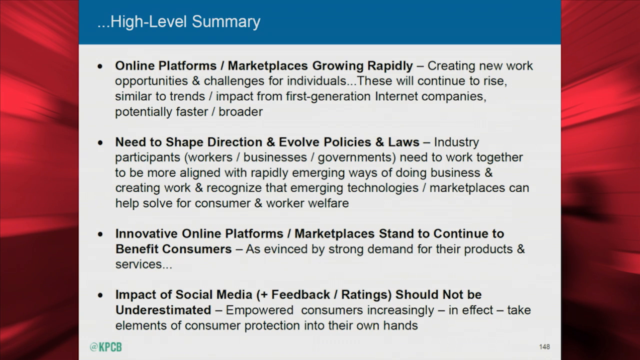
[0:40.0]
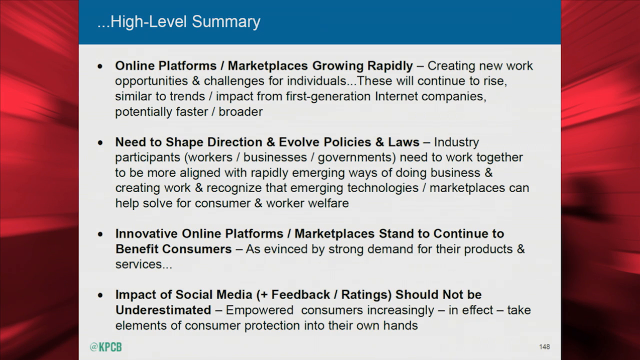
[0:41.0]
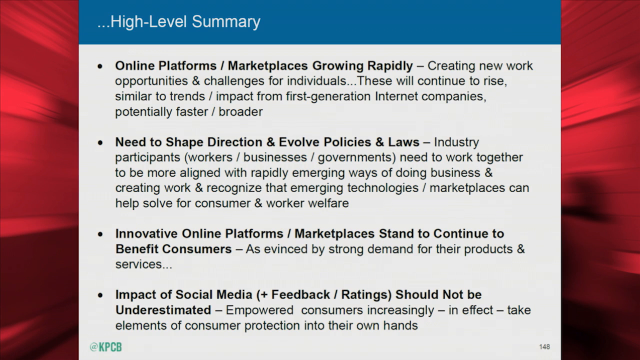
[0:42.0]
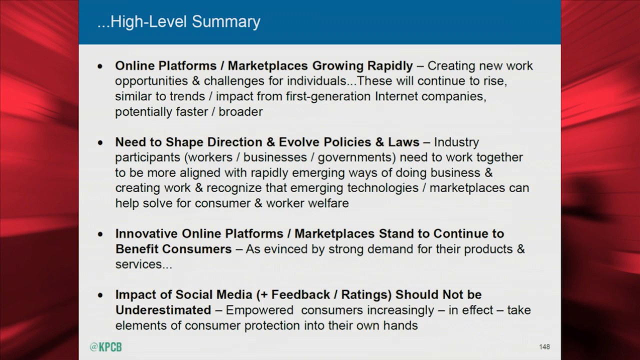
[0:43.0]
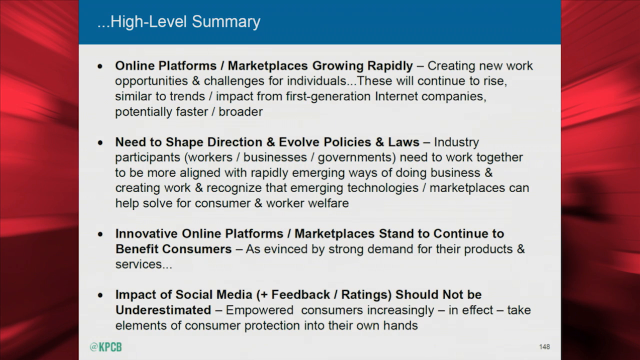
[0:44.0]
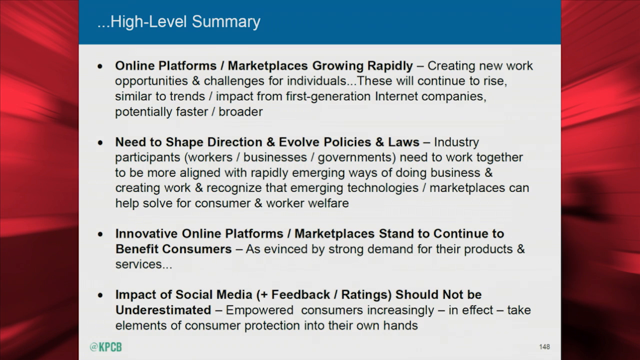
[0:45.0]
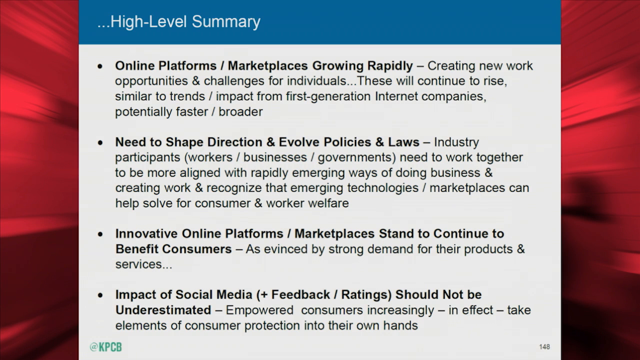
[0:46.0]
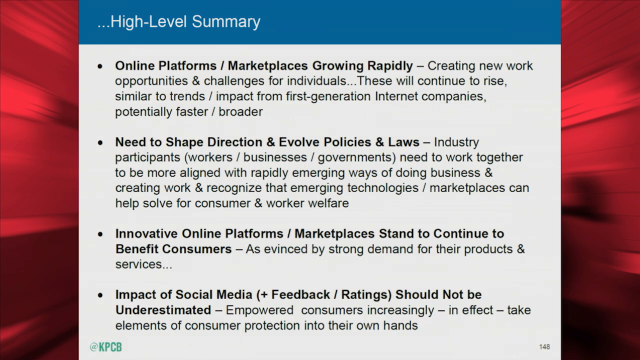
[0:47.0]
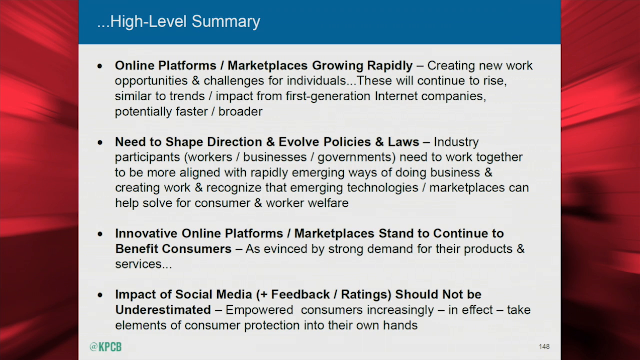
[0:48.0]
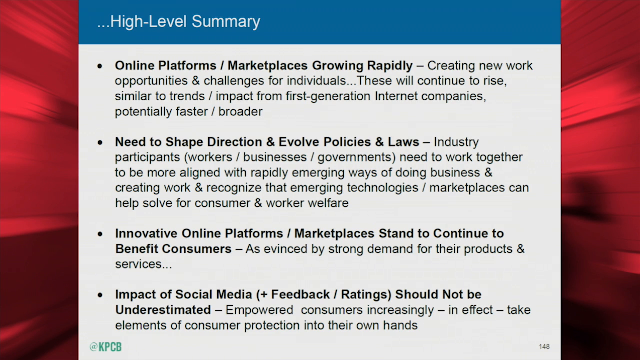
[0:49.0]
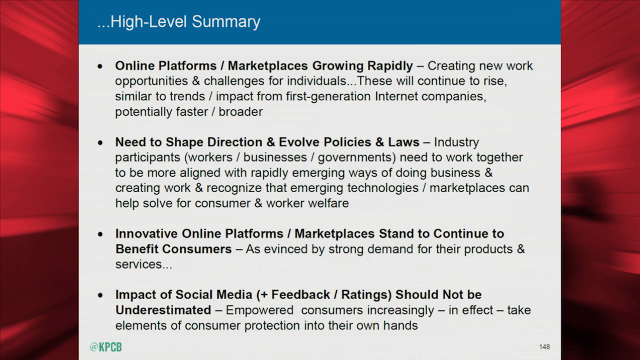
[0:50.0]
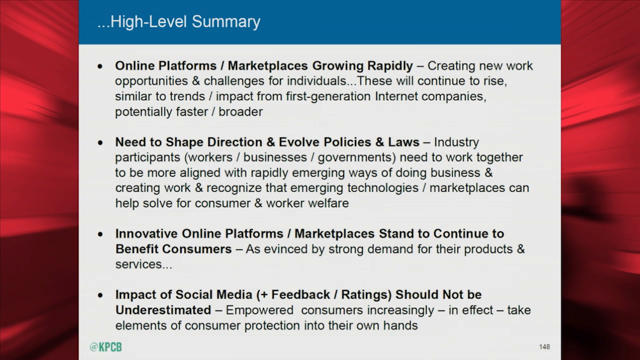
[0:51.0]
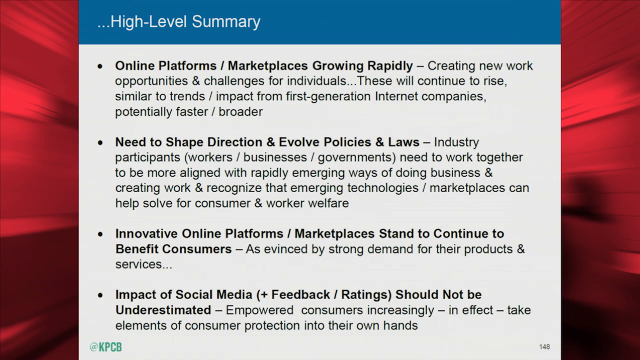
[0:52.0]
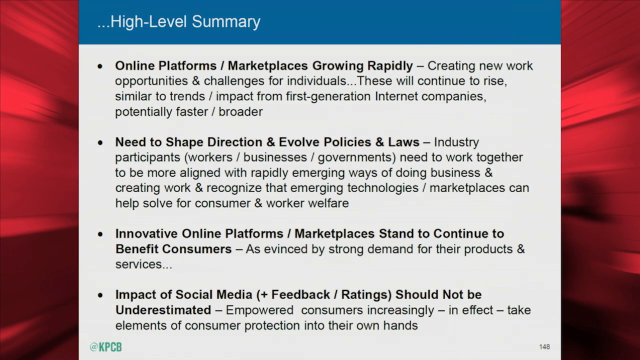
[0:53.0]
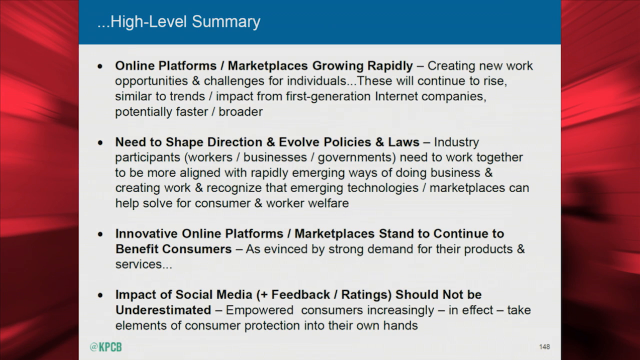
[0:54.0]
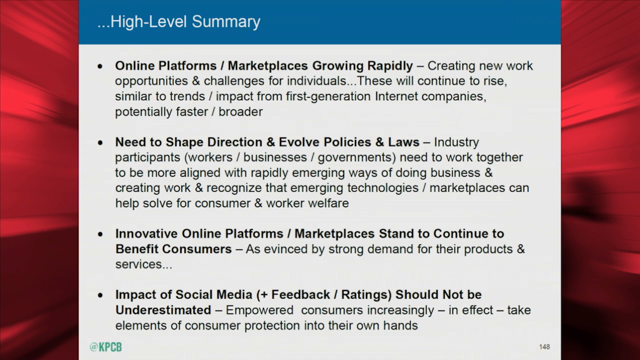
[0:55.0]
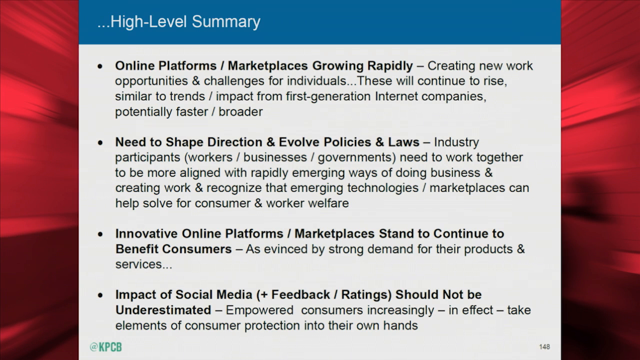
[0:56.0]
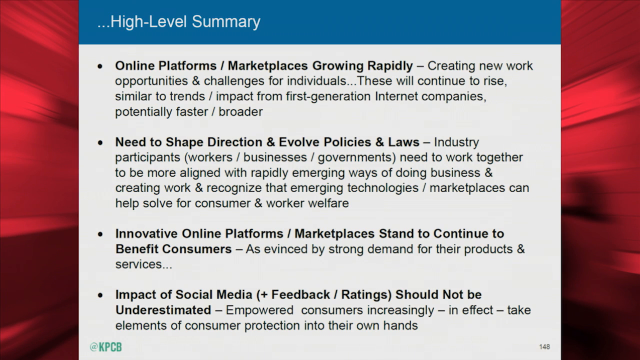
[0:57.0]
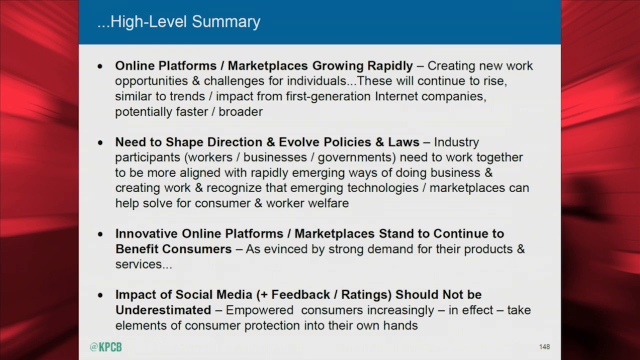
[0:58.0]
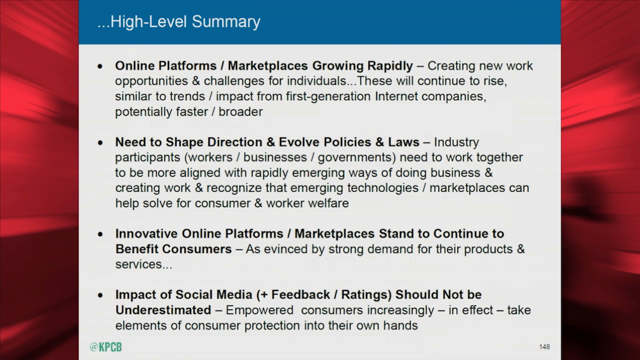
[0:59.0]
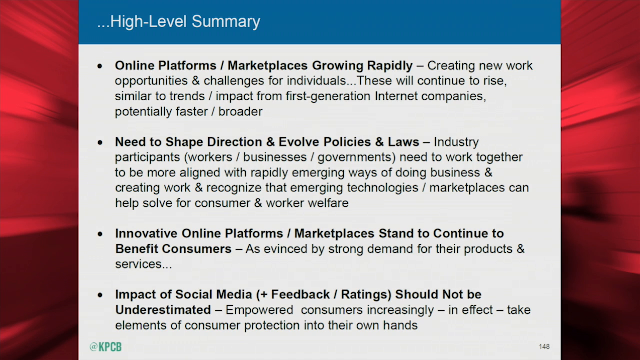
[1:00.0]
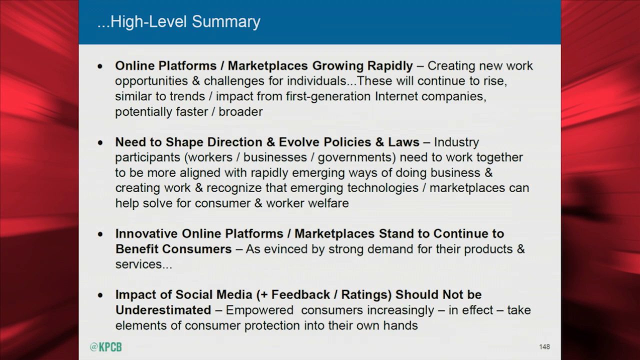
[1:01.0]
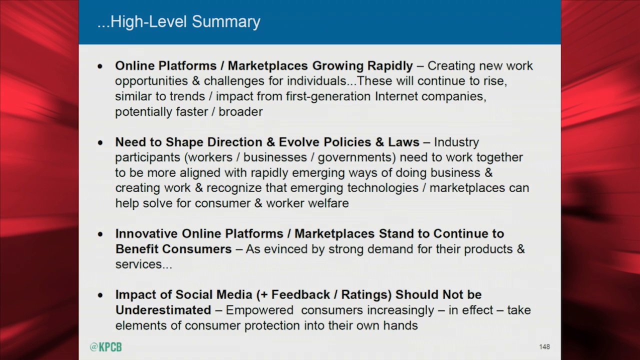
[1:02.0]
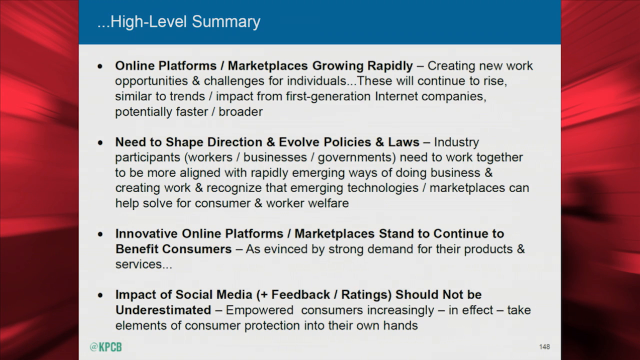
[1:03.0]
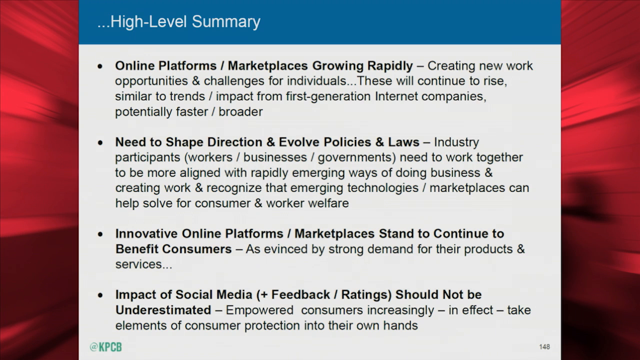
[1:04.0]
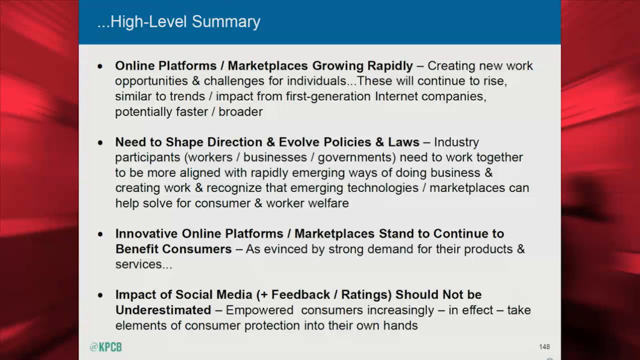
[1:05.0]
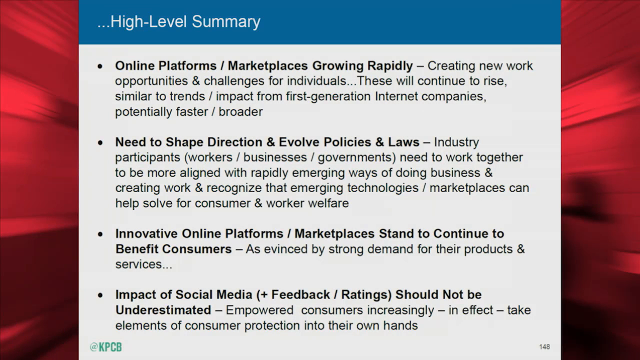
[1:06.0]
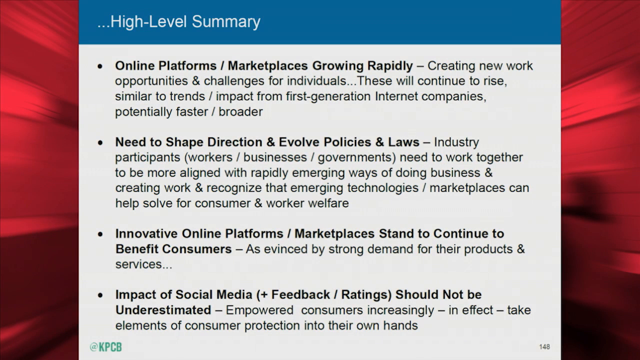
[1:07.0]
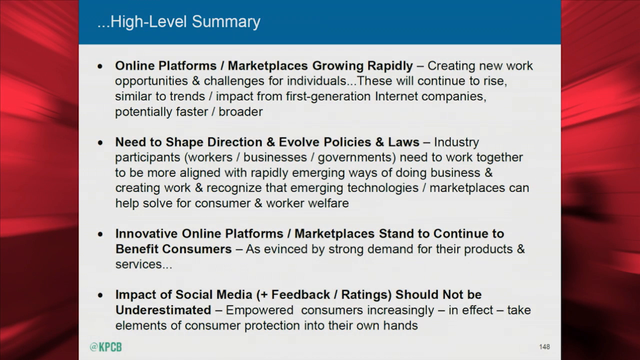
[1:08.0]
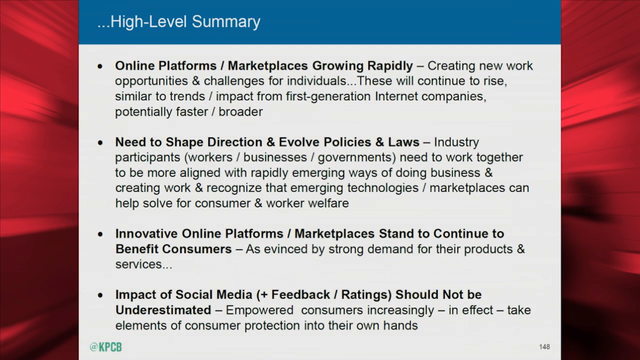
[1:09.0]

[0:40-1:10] An image with a red-black background that looks like fabric has what looks almost like a page of paper in the center, taking up most of the screen. A blue bar at the very top reads "High-Level Summary" in white lettering. The rest of the page has a white background with four black bullet points, the first in bold: "Online platforms/marketplaces growing rapidly-Creating new work opportunities, & challenges for individuals... These will continue to rise, similar to trends/impact from first-generation internet companies, potentially faster/broader"; "Need to shape direction & evolve policies and laws-Industry participants (workers, business, and governments) need to work together to be more aligned with rapidly emerging ways of doing business & creating work & recognize that emerging techniques/marketplaces can help solve for consumer and worker welfare"; "Innovative online platforms/marketplaces stand to continue to benefit consumers-As evinced by strong demand for their products and services"; and "Impact of social media (+Feedback/Ratings) should not be underestimated-Empowered consumers increasingly - in effect -take elements of consumer protection into their own hands". This stays on screen; a few seconds before the end, everything flashes blue and the image disappears for a split second before reappearing and remaining on screen.